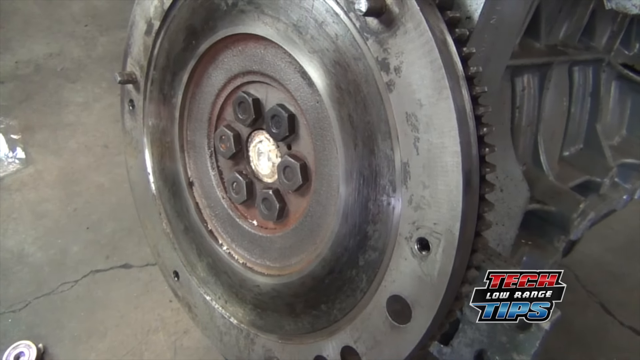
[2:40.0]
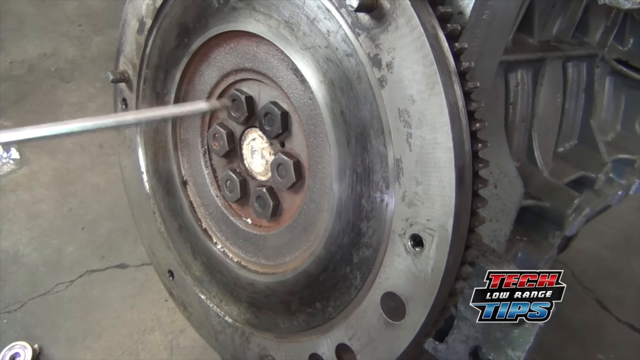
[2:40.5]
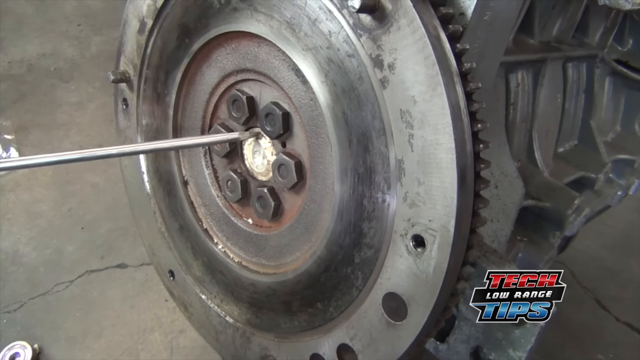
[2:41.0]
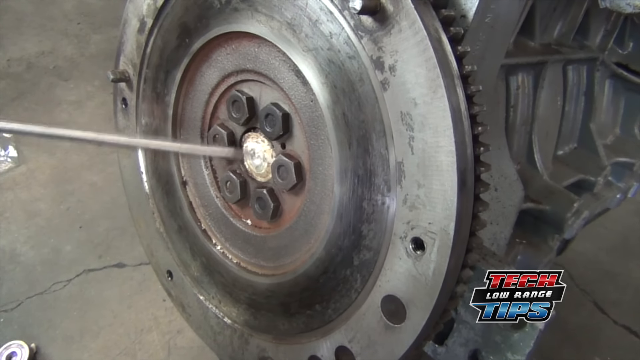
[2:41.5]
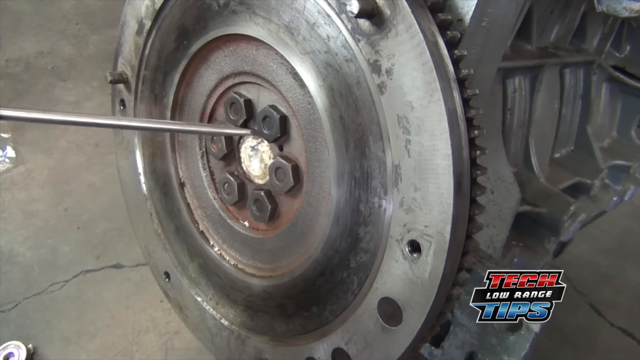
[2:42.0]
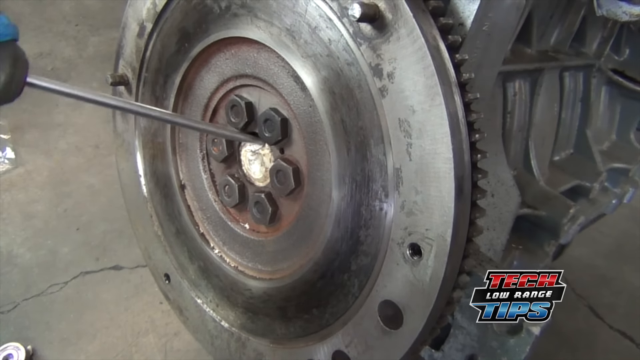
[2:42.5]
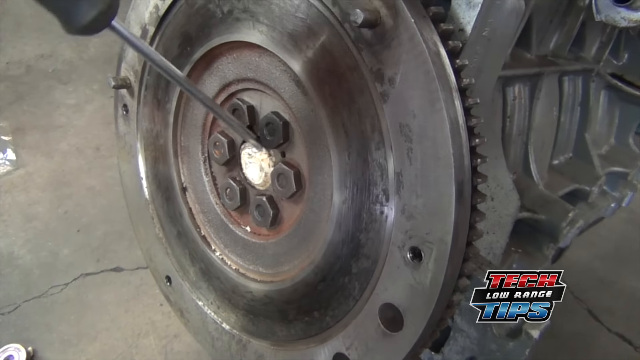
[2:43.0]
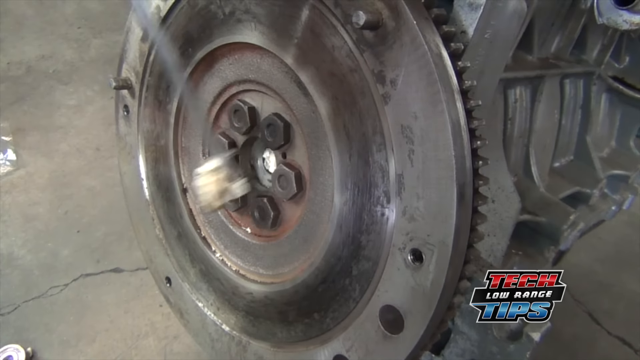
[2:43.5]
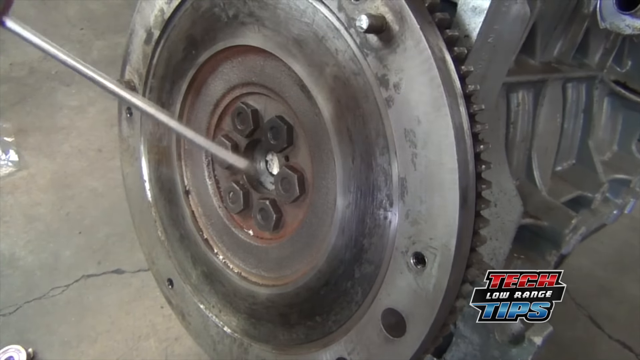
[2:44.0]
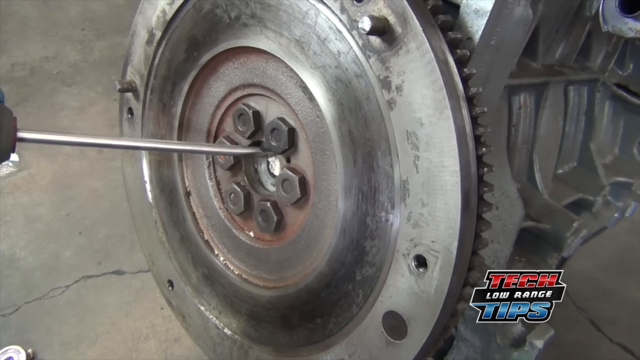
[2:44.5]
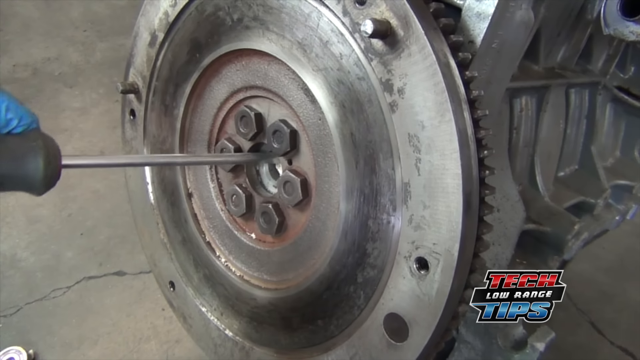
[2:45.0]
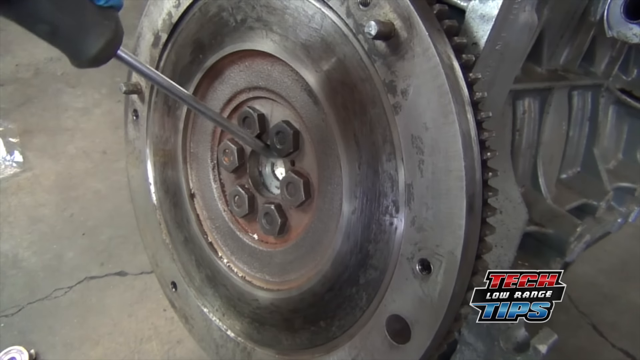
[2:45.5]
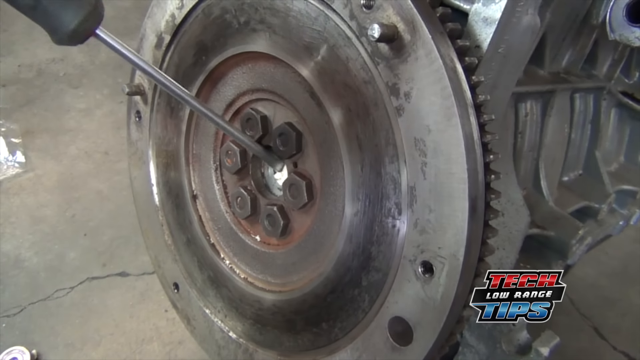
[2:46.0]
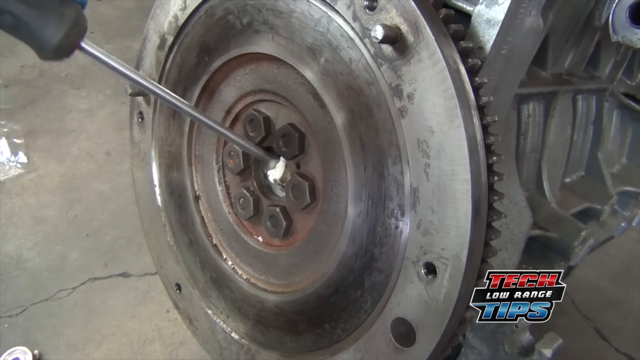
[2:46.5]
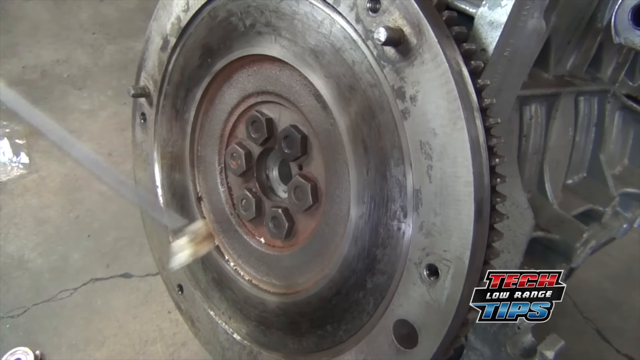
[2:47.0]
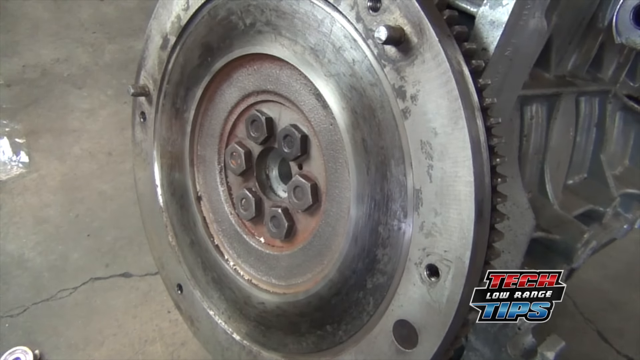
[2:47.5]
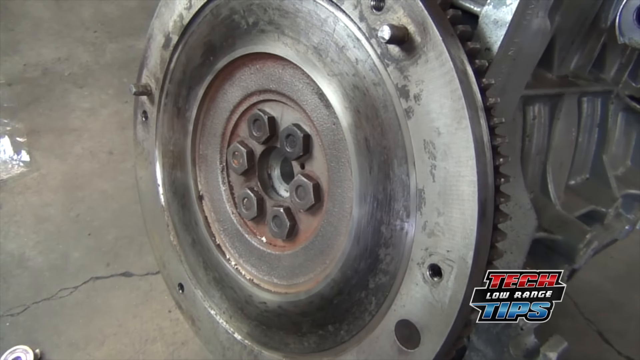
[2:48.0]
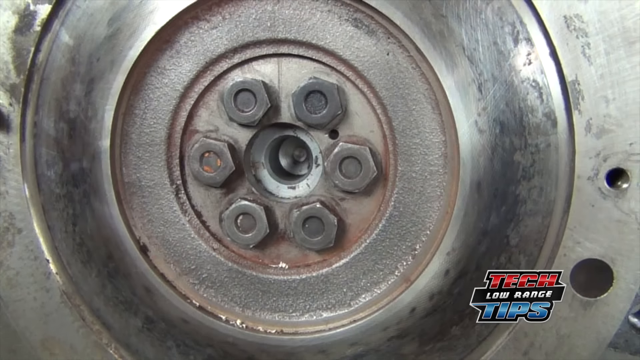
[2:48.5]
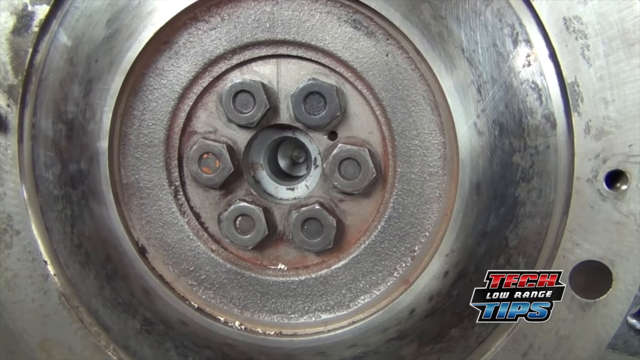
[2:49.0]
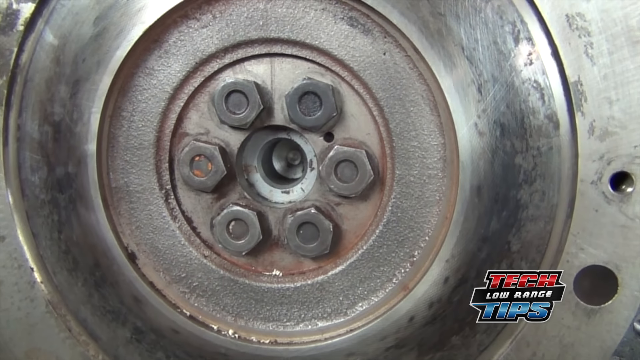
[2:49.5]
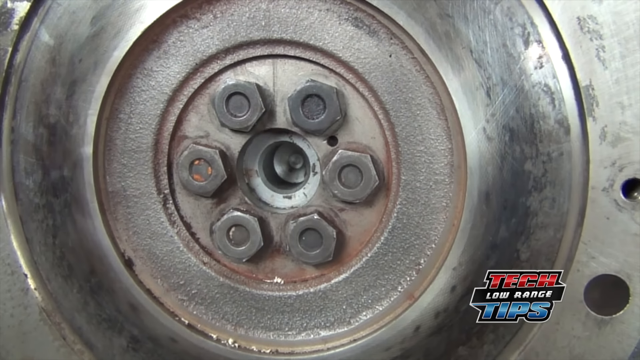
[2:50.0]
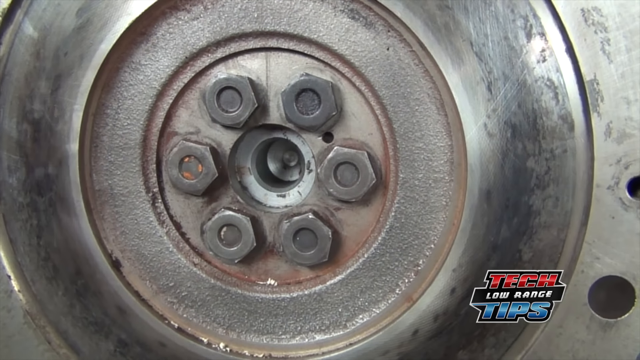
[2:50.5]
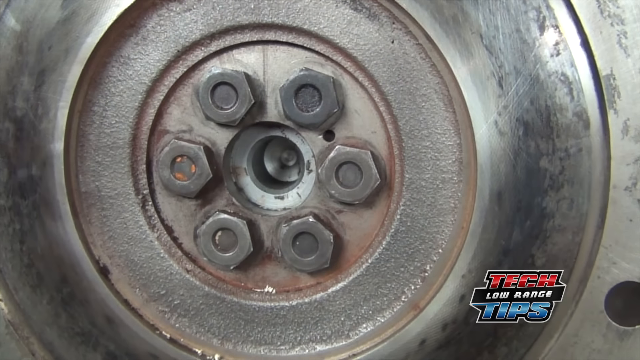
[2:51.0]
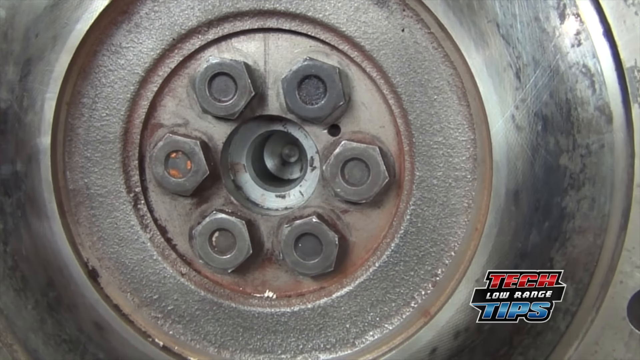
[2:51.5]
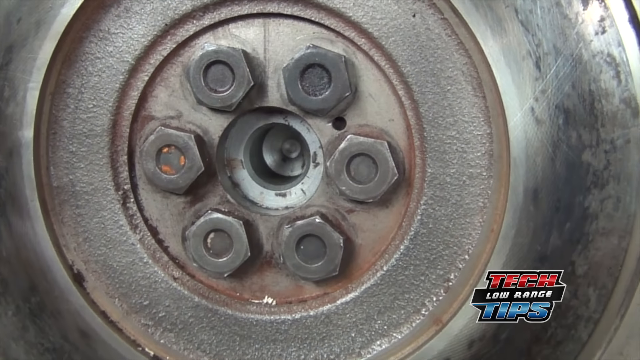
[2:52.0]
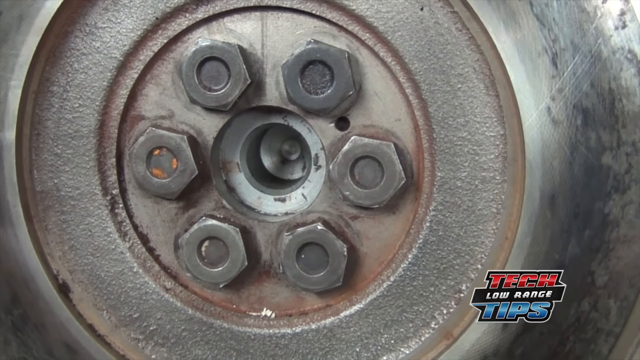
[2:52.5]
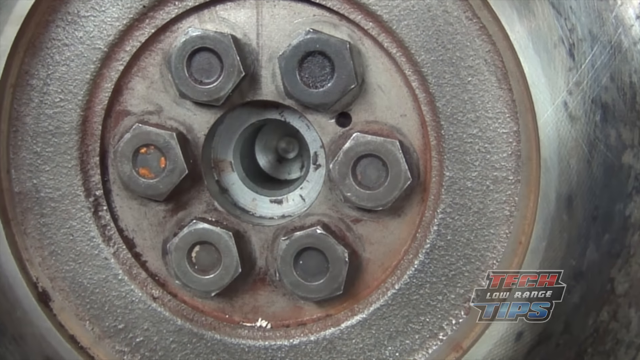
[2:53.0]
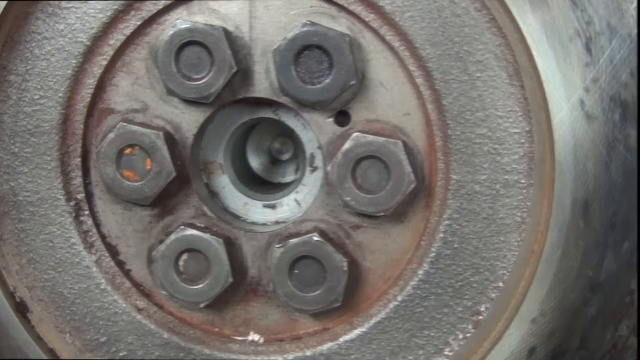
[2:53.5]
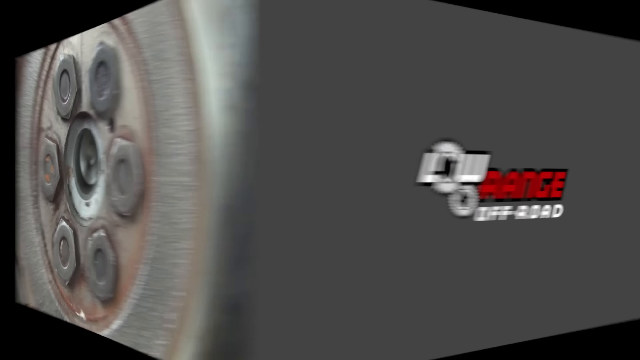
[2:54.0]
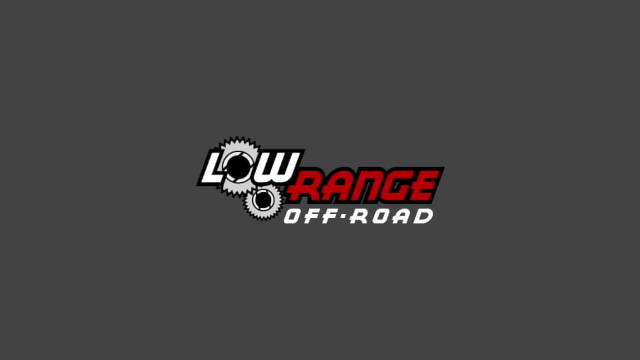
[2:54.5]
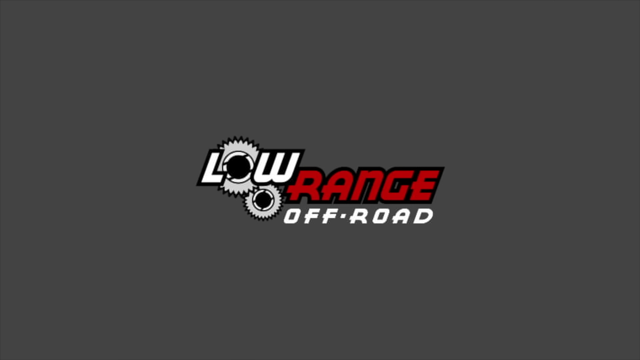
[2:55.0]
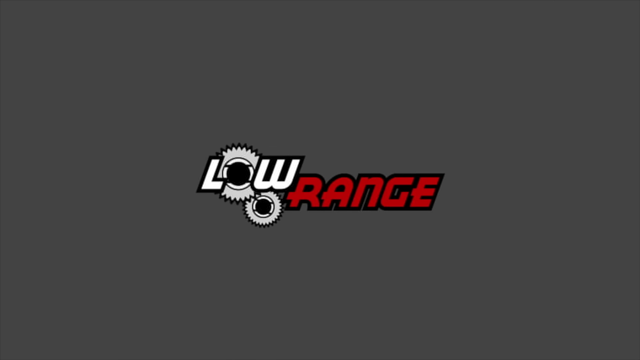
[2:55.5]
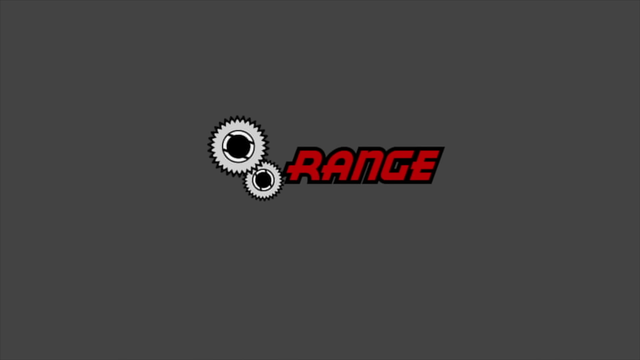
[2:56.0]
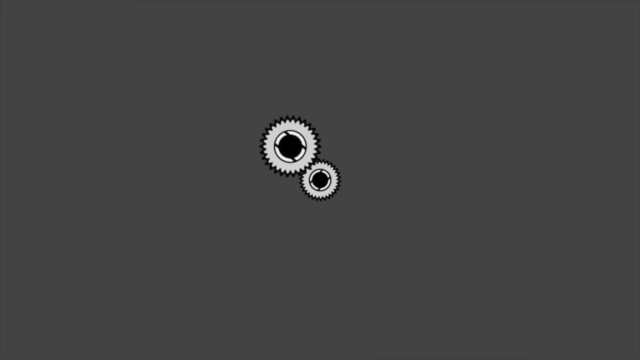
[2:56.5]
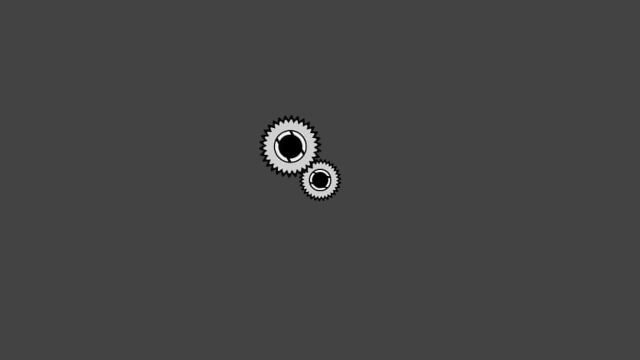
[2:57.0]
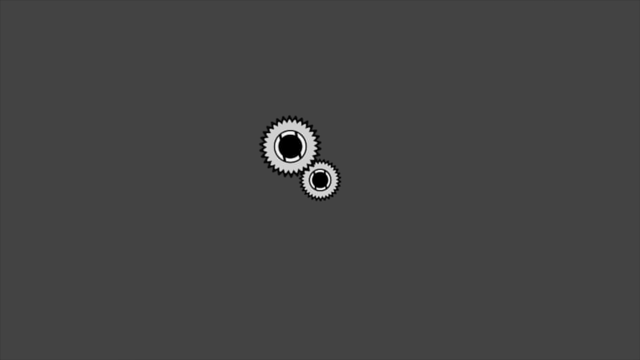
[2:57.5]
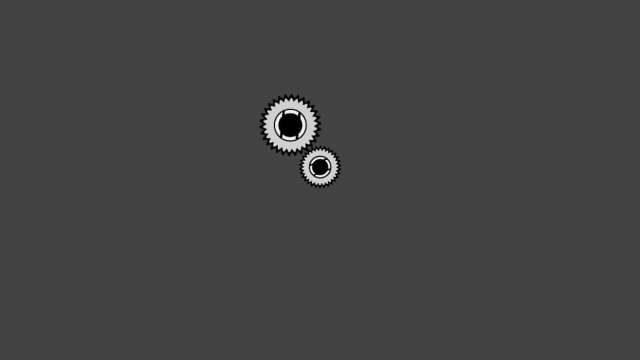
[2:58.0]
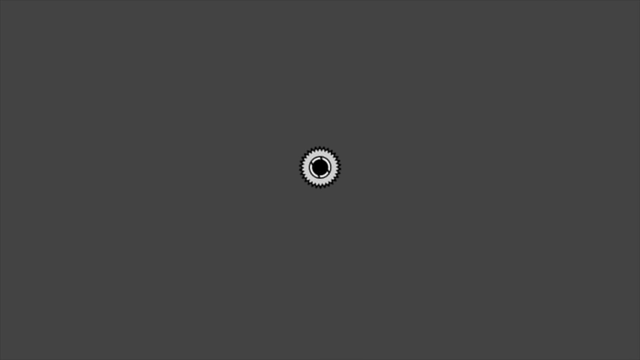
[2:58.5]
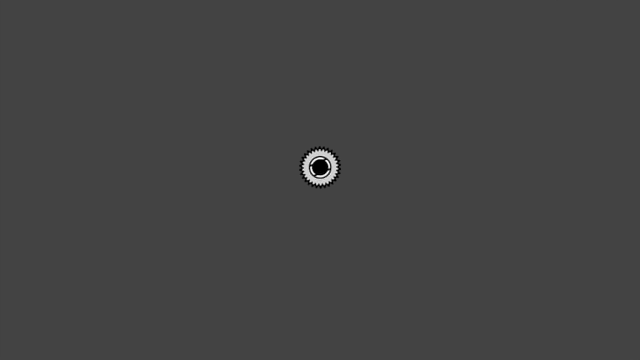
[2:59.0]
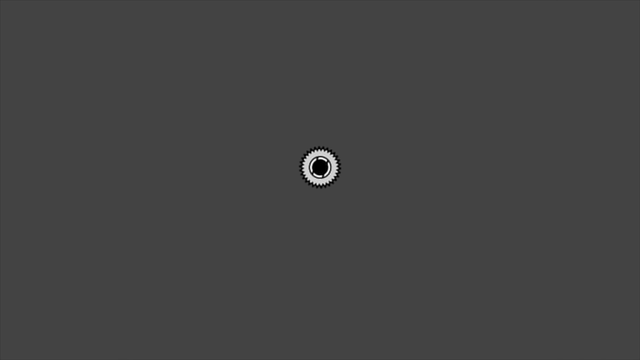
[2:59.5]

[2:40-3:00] The text "tech low range tips" appears. A little metal plate has about six little nuts around it and a middle section, which had a cap or nut on it that has been taken off. A tool is used to scrape out the putty that was put in, cleaning it all out, leaving just a hole in the middle of the rim. The text "low range off-road" appears over a background with some little robotic gears.